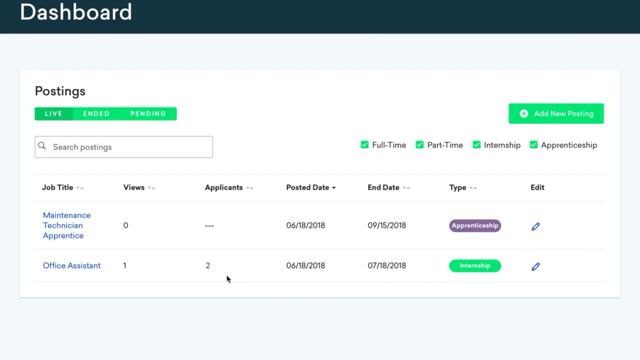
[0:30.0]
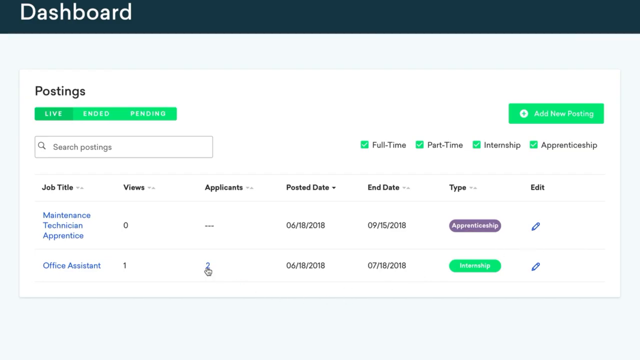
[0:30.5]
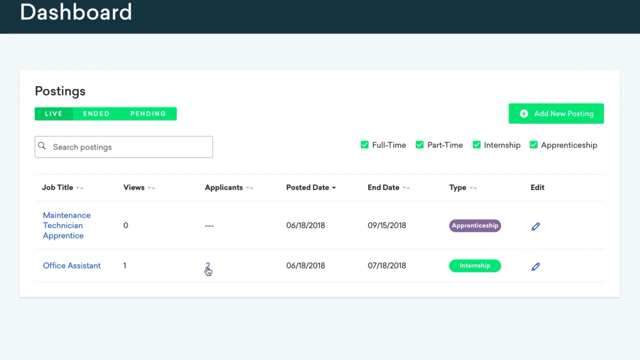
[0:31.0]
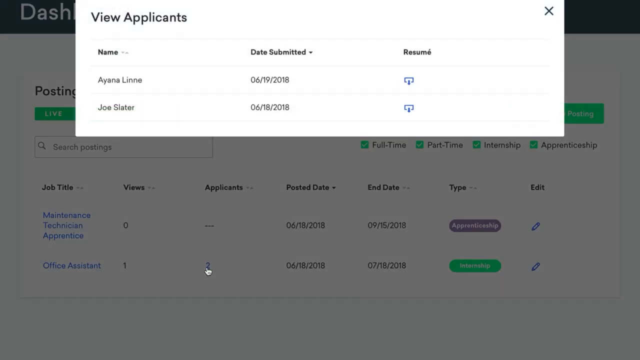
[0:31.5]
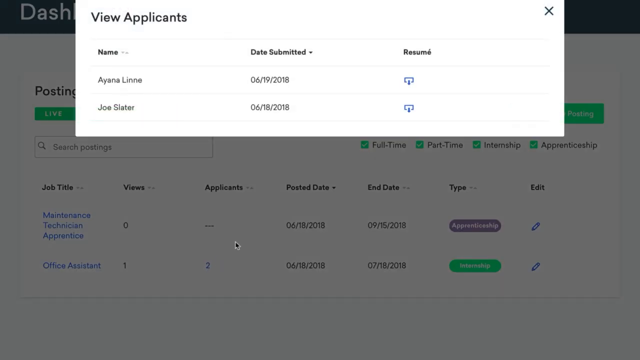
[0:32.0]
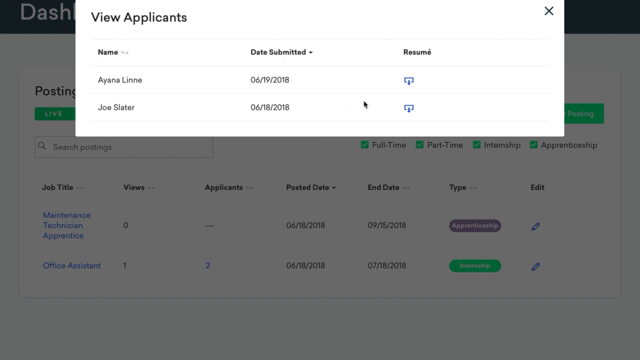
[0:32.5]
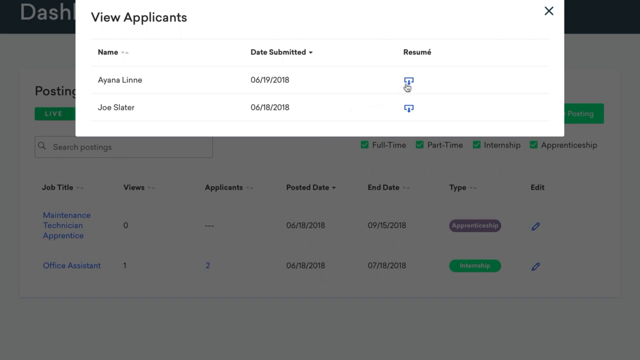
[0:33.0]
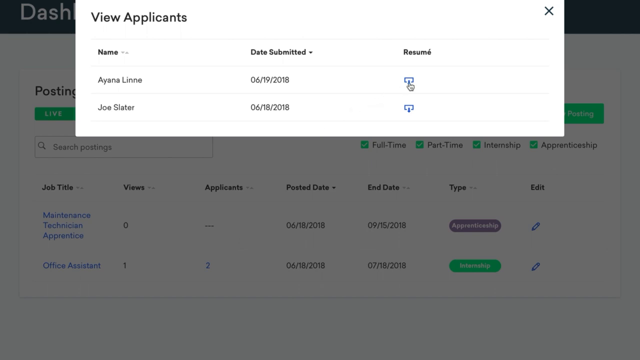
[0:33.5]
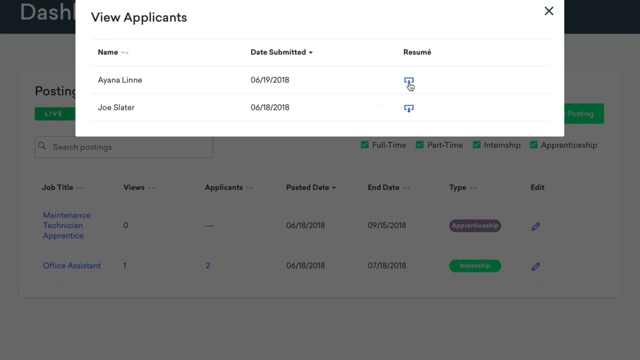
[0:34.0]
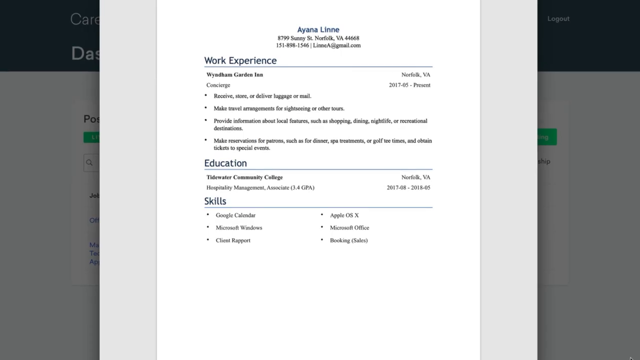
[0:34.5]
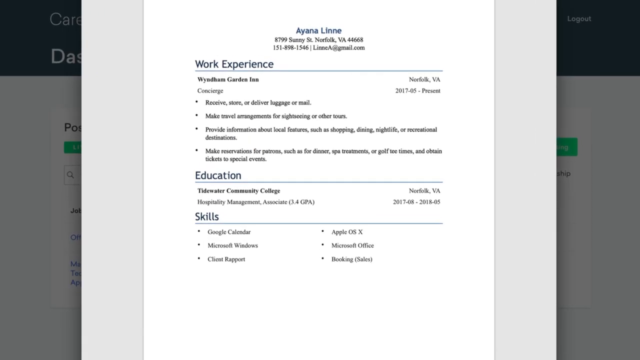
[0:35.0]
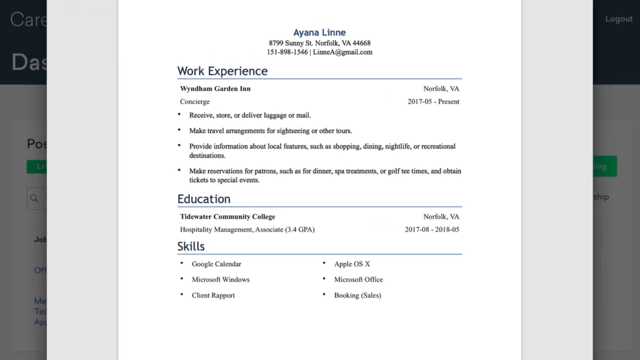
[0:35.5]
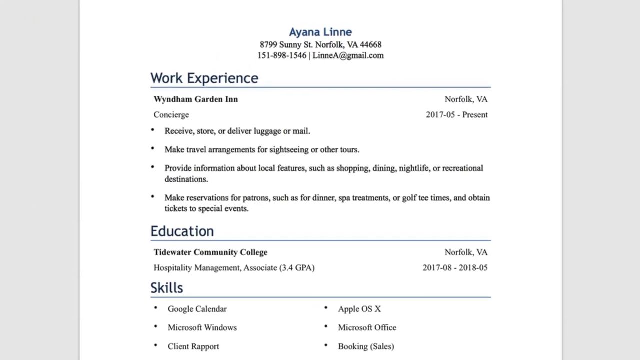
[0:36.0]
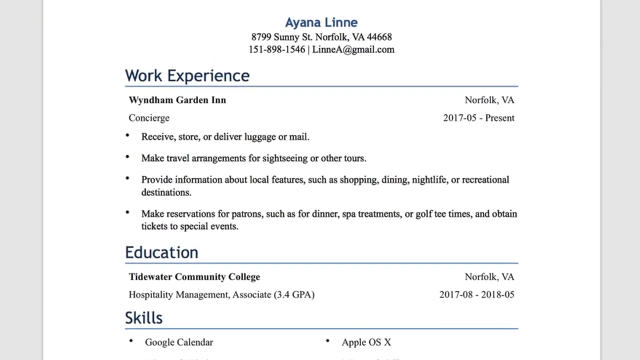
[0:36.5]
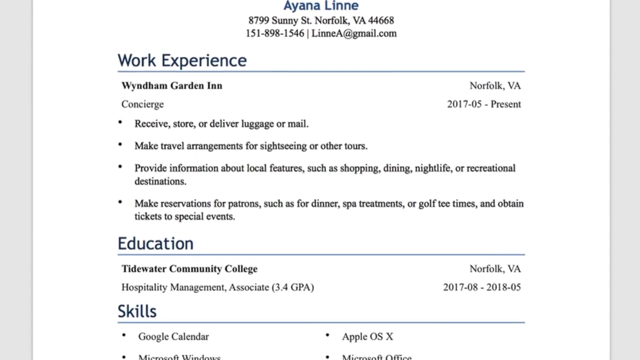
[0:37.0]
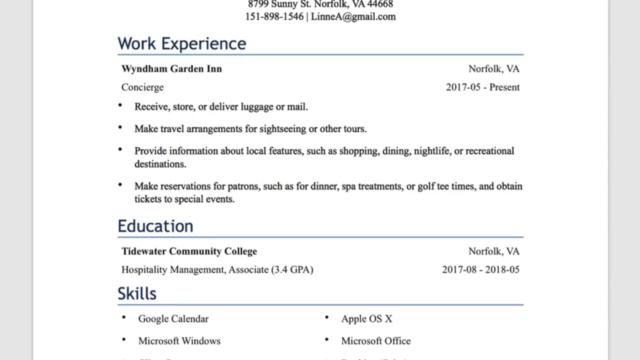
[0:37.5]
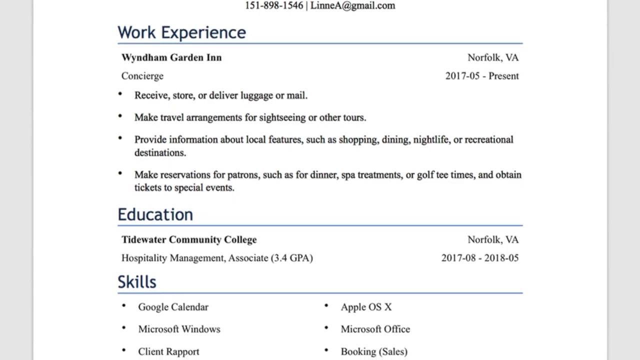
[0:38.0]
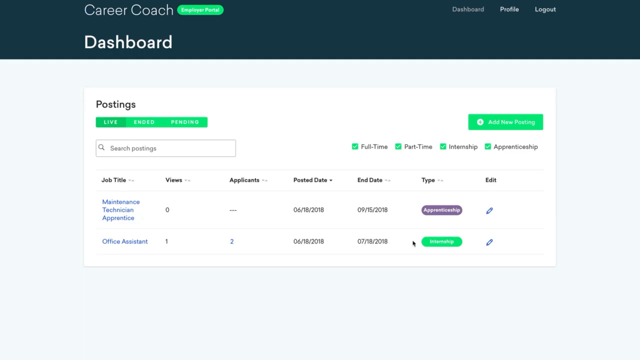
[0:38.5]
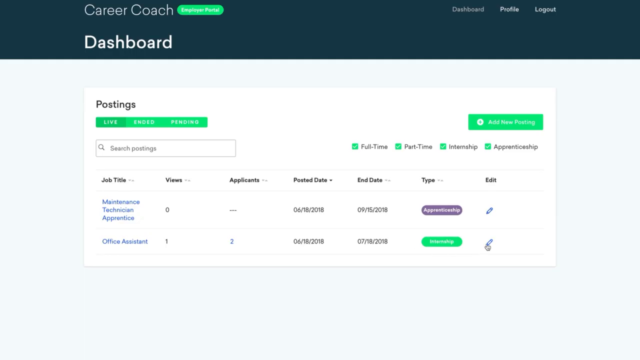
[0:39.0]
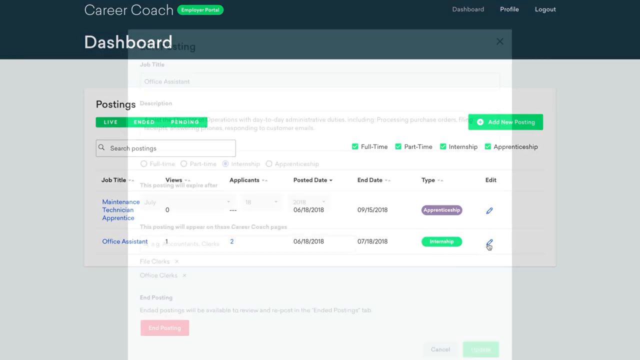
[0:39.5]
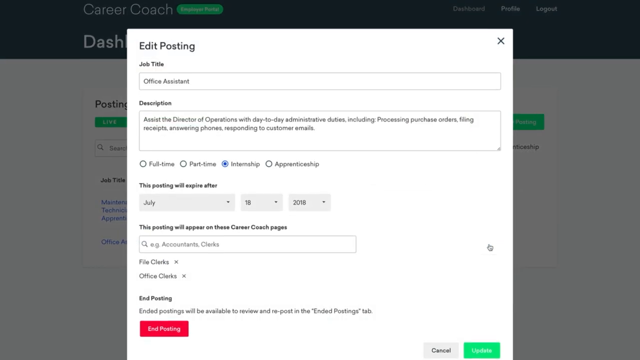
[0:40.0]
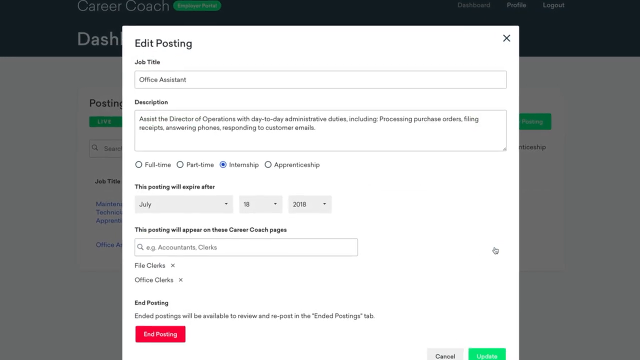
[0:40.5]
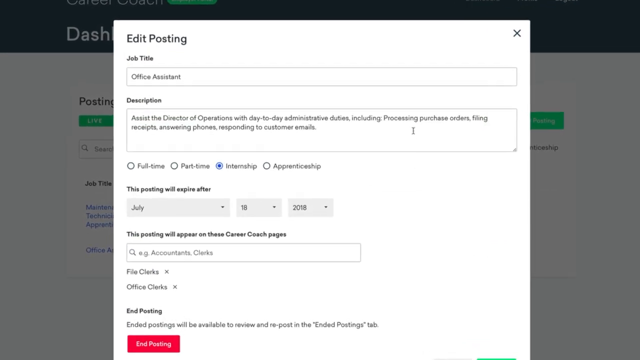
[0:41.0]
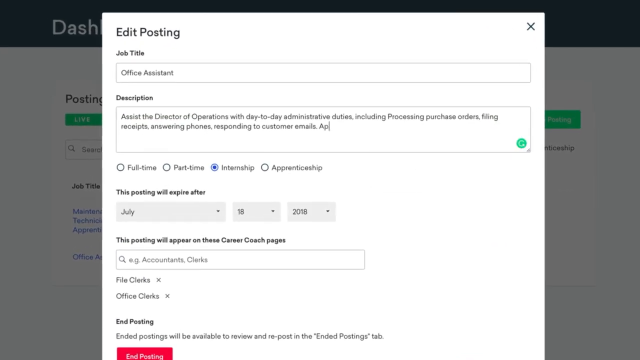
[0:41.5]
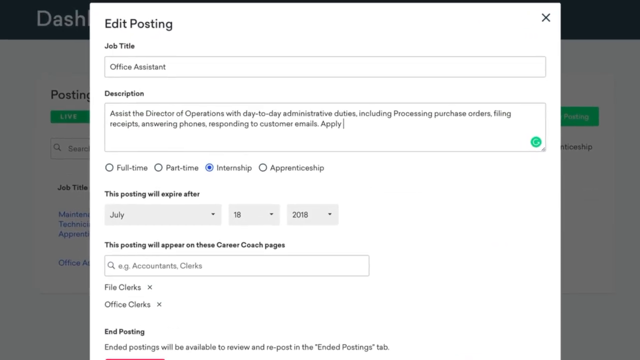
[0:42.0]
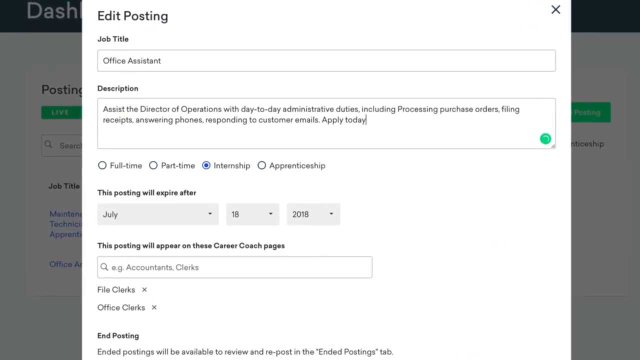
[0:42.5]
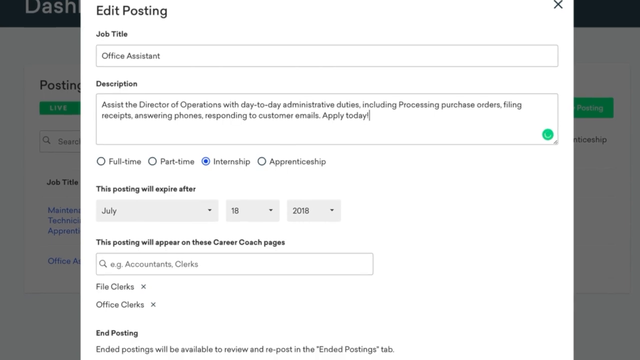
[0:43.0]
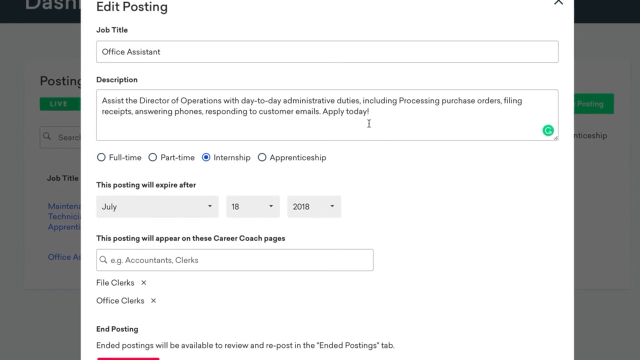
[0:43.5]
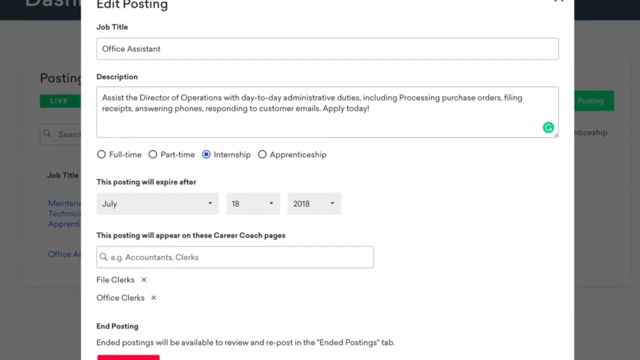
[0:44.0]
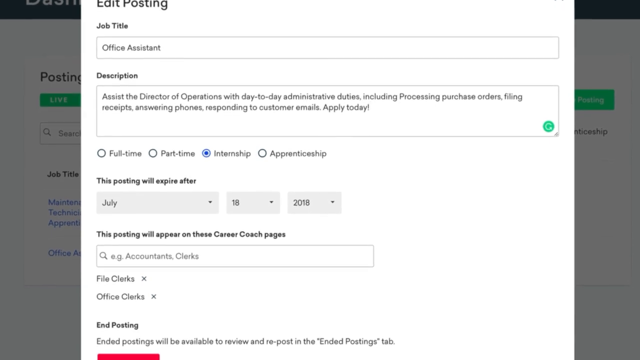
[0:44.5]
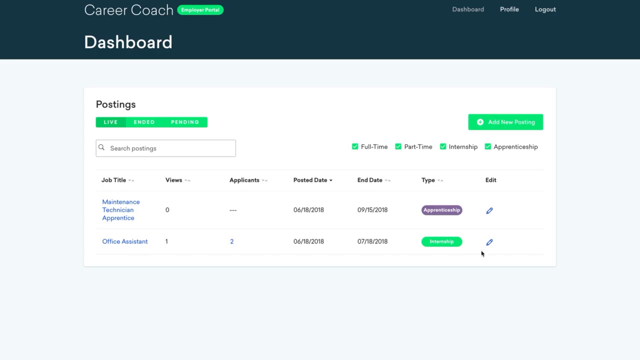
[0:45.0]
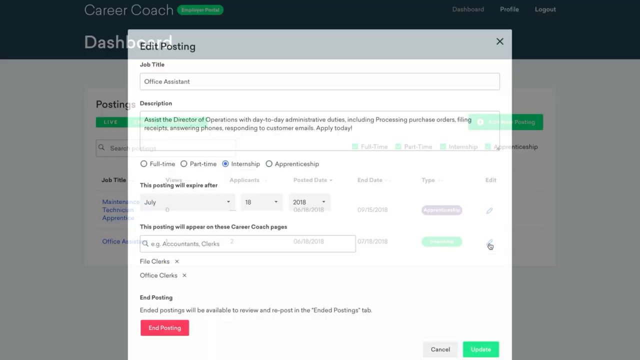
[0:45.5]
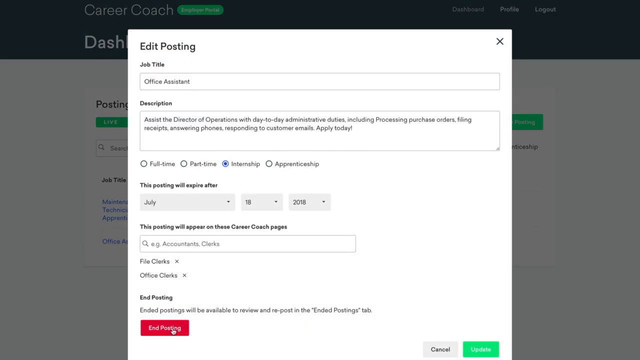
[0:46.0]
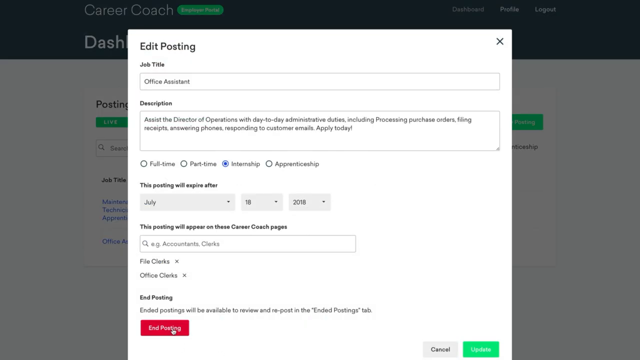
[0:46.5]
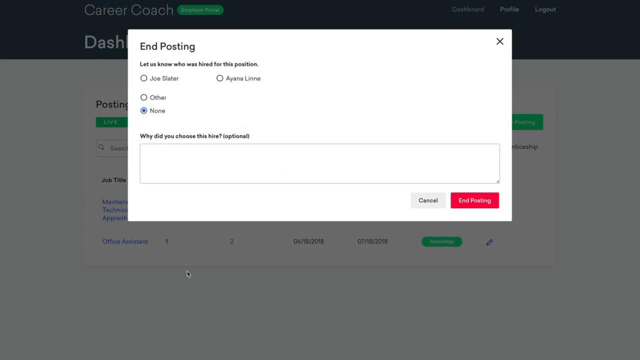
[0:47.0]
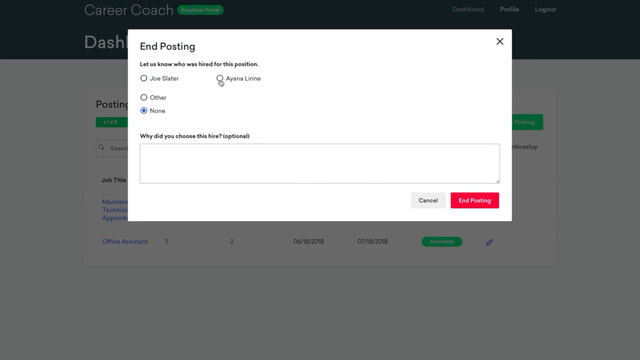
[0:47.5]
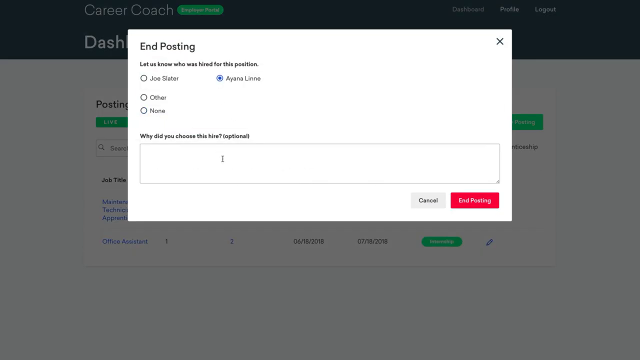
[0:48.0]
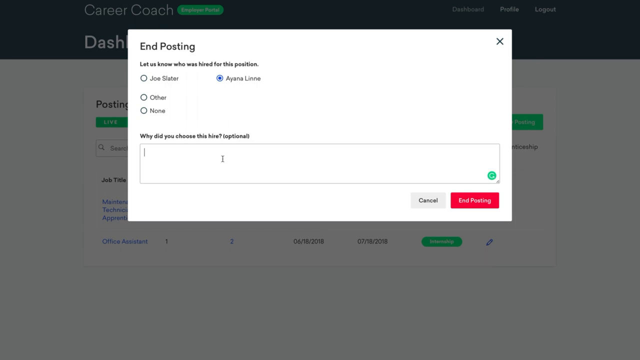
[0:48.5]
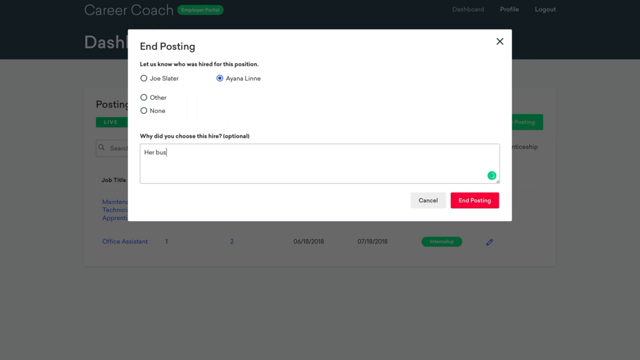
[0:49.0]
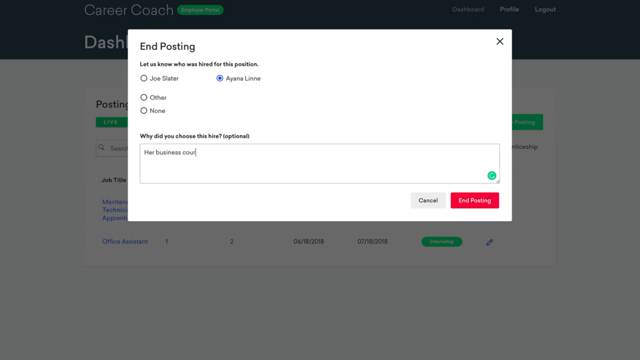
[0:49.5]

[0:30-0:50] The dashboard of a job posting website is shown, with the word "dashboard" on the top left. The postings section includes options for live postings, ended postings, and pending postings, with a search postings field below. To the right is an option to add new postings, with four clickable options below it for full-time, part-time, internship, and apprenticeship; all four are clicked. Two postings are listed. The first, Maintenance Technician Apprentice, has zero views and no applicants, was posted on June 18, 2018, ends on September 15, 2018, and is an apprenticeship. The second, Office Assistant, has one view and two applicants, was posted on June 18, 2018, ends on July 18, 2018, and is an internship. The user clicks the number 2 under applicants for the Office Assistant posting, and a window titled "View Applicants" appears showing the two applicants, Ayana Lin and Joe Slater. The video cuts to Ayana Lin's resume, showing her work experience, education, and skills, then cuts back to the dashboard, where the user edits the Office Assistant posting. They then select Ayana Lin as their choice for the position.